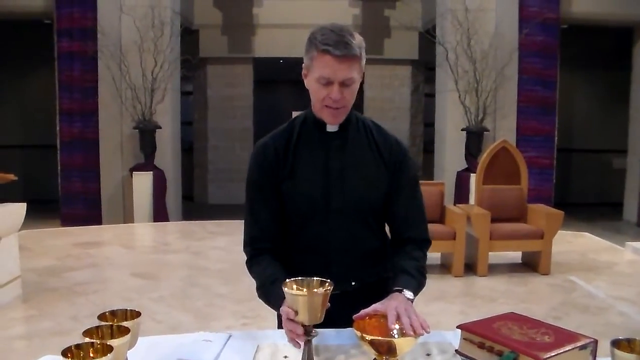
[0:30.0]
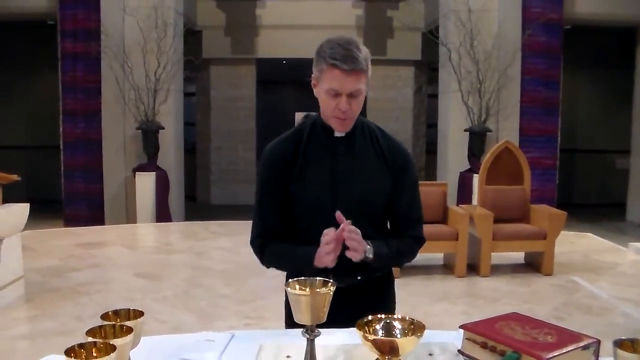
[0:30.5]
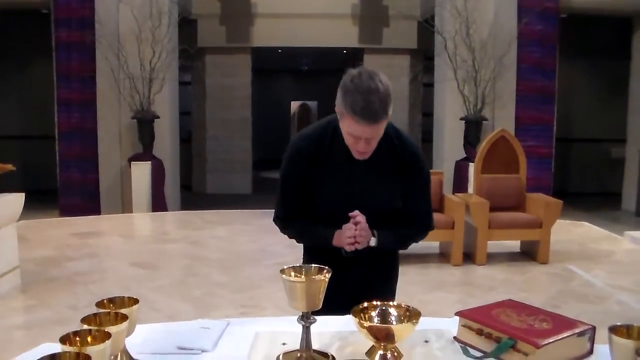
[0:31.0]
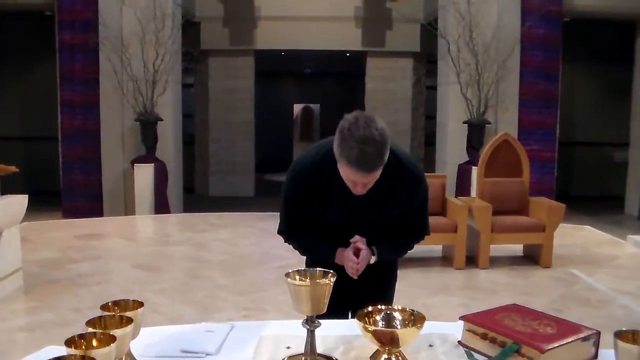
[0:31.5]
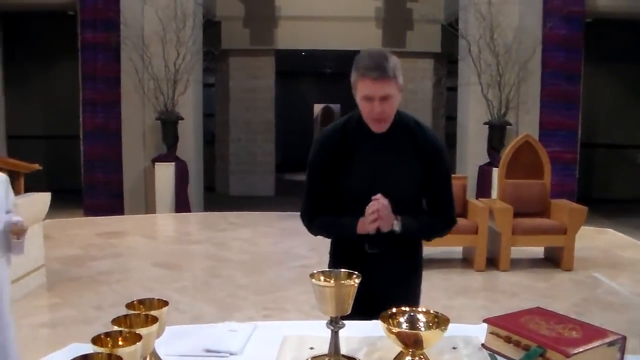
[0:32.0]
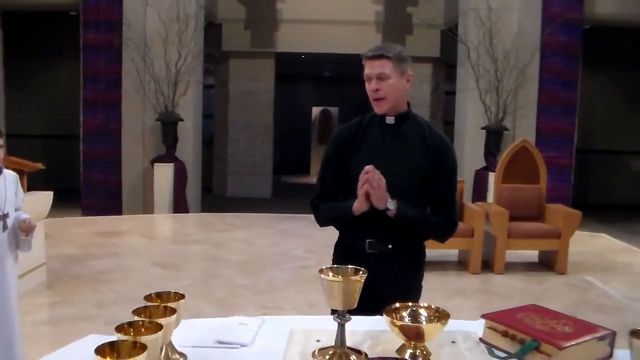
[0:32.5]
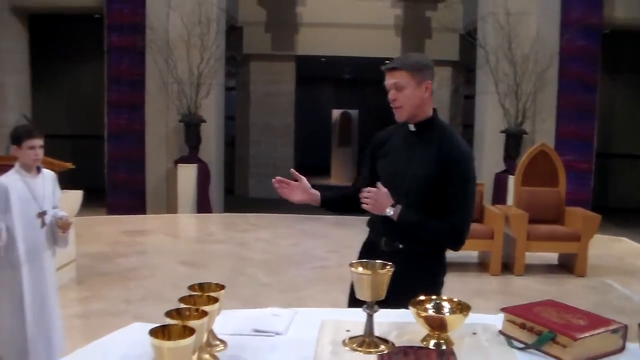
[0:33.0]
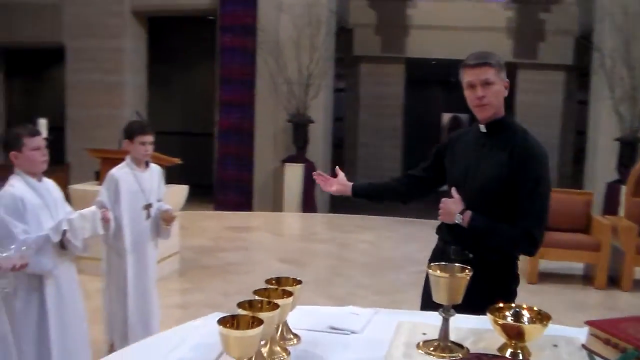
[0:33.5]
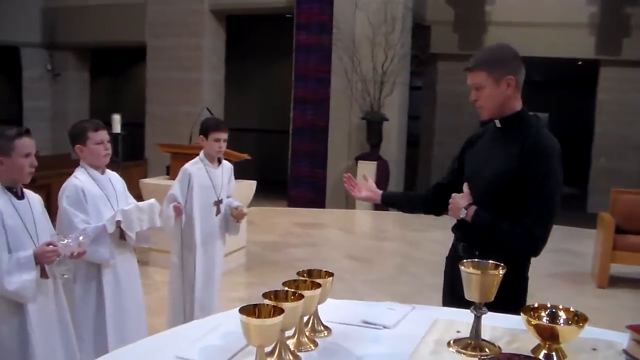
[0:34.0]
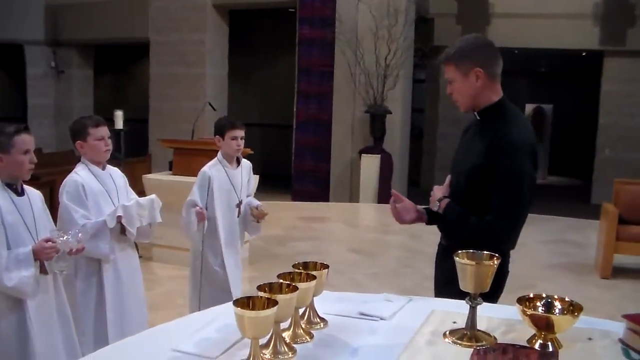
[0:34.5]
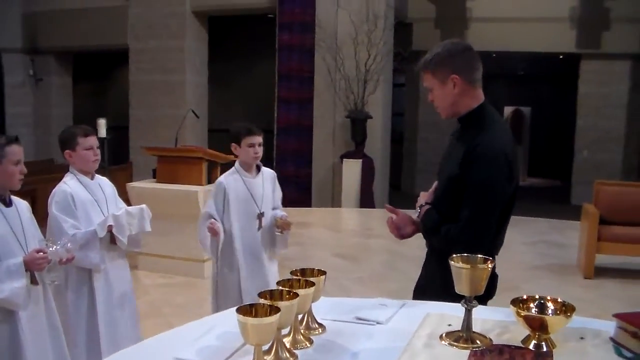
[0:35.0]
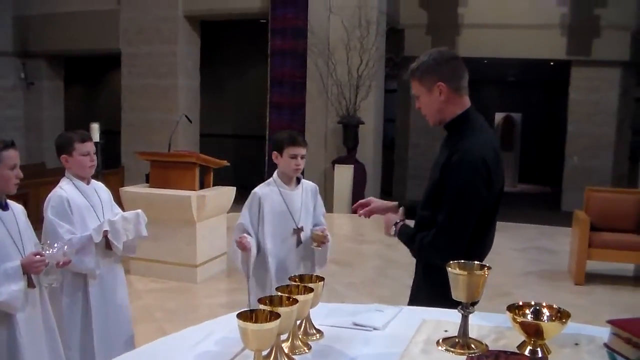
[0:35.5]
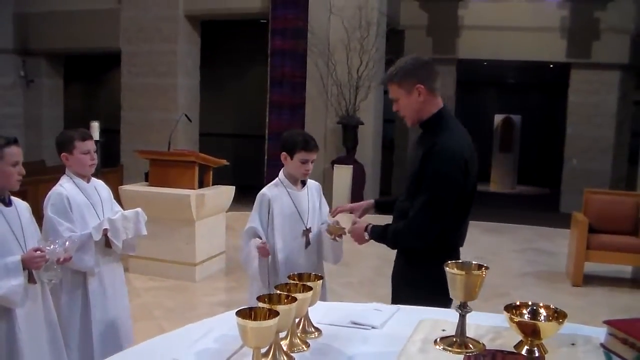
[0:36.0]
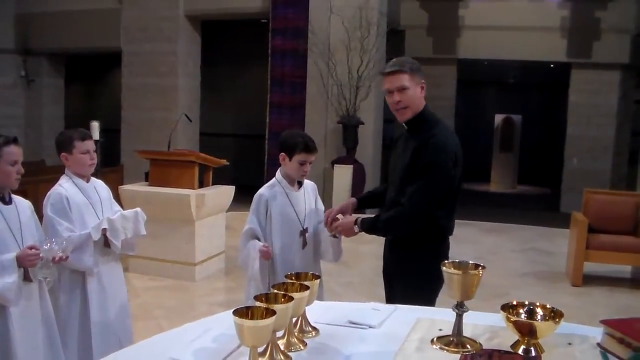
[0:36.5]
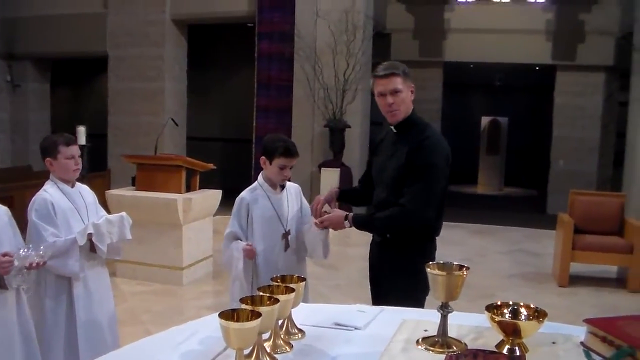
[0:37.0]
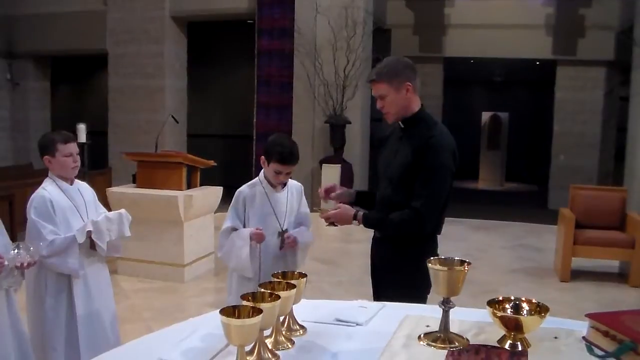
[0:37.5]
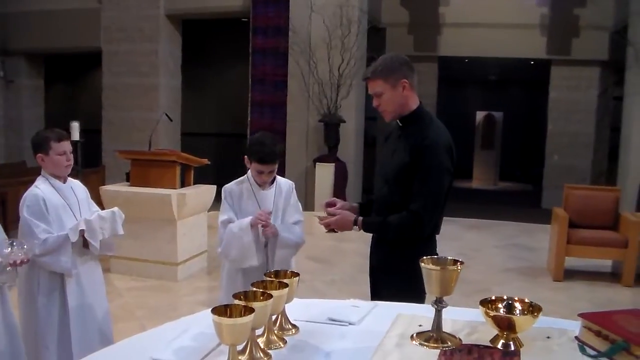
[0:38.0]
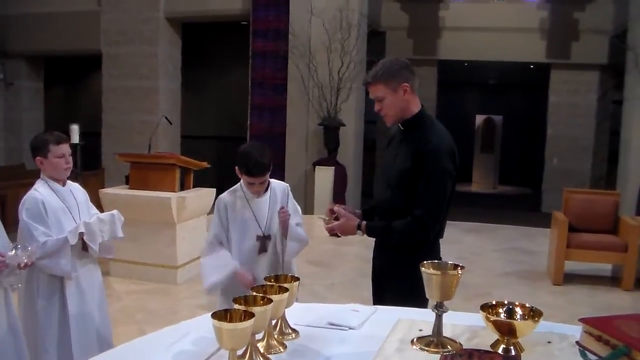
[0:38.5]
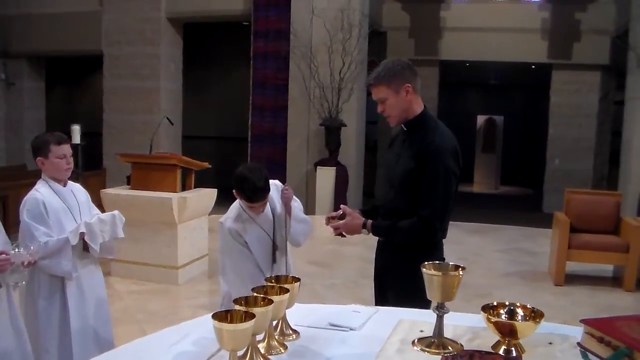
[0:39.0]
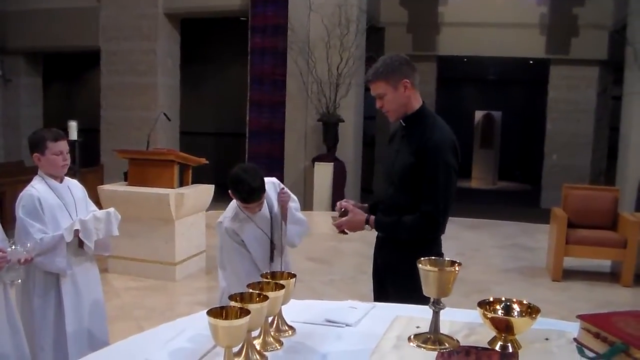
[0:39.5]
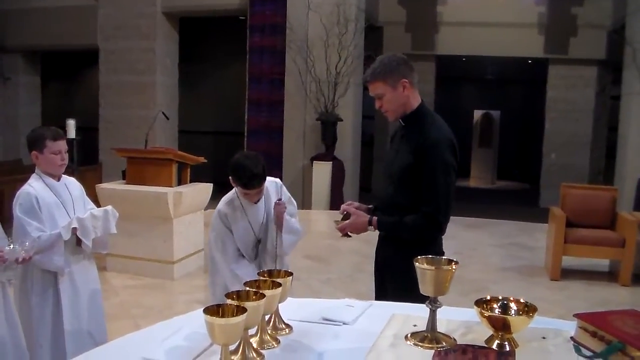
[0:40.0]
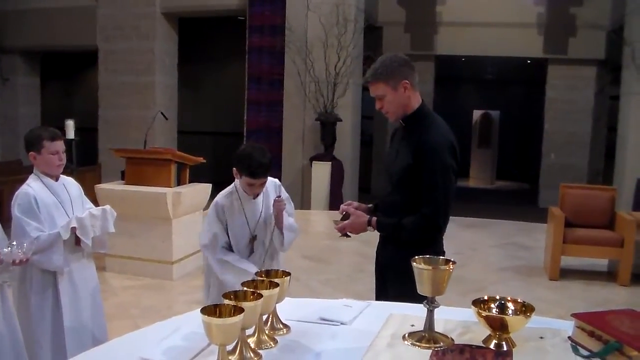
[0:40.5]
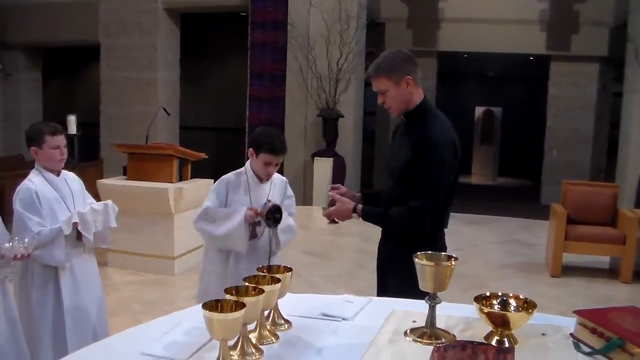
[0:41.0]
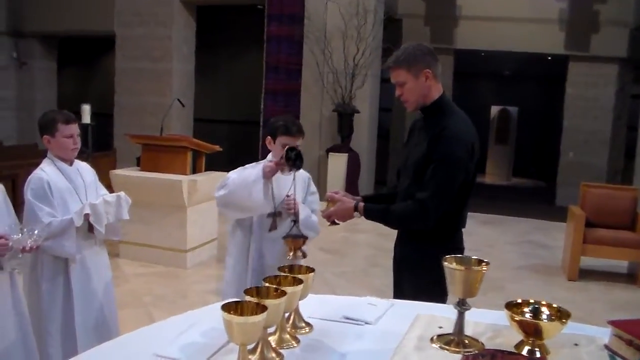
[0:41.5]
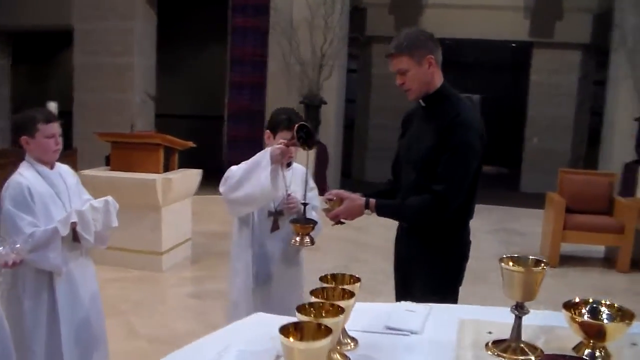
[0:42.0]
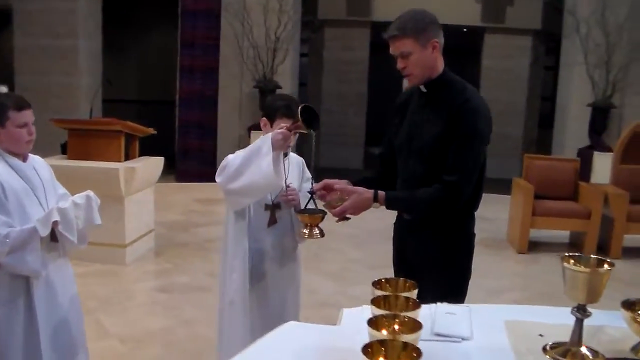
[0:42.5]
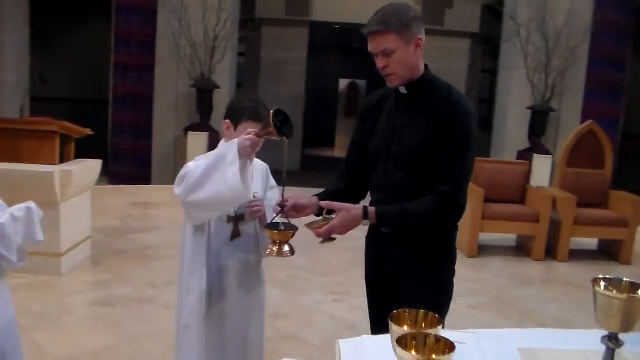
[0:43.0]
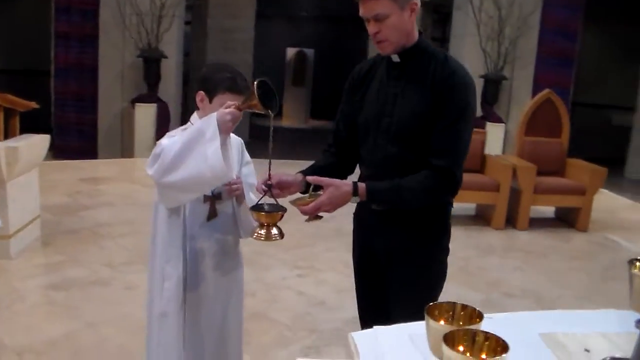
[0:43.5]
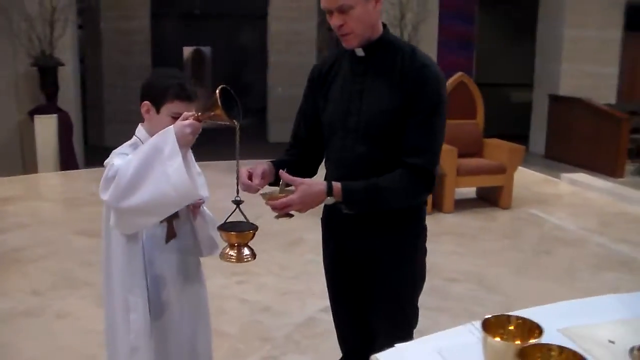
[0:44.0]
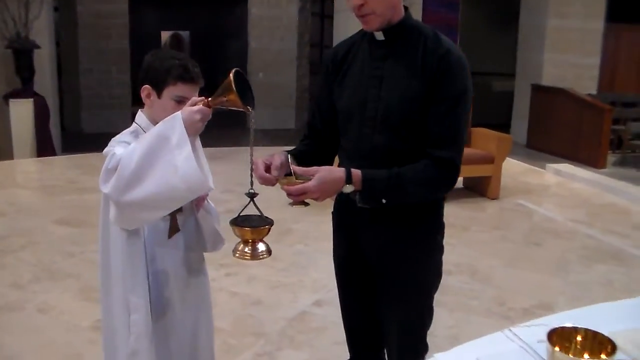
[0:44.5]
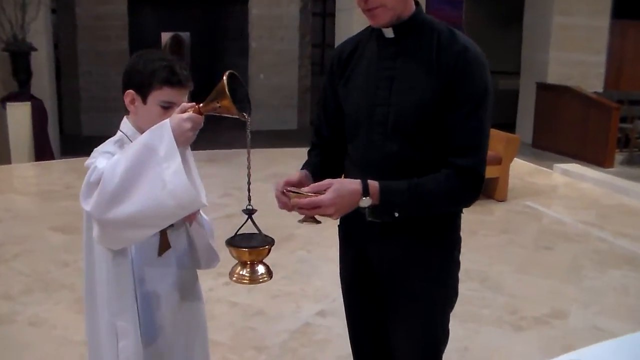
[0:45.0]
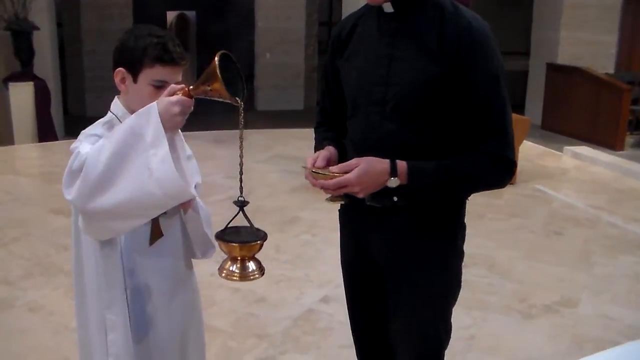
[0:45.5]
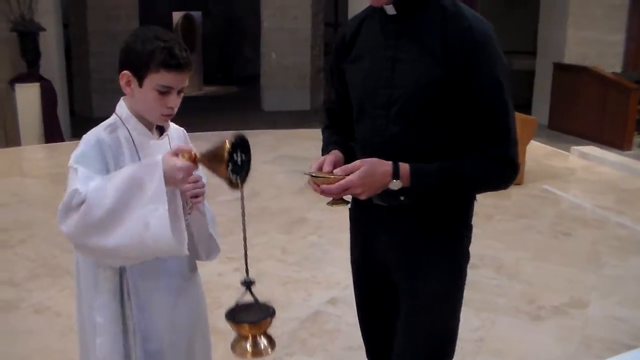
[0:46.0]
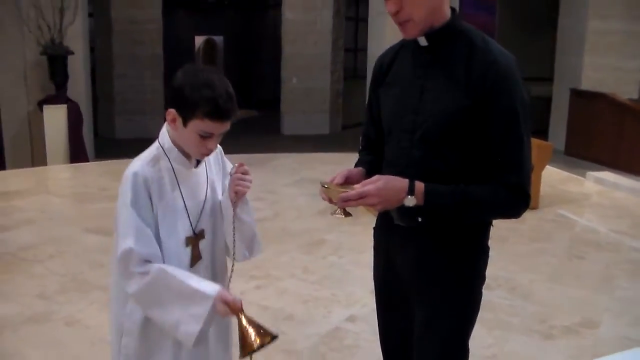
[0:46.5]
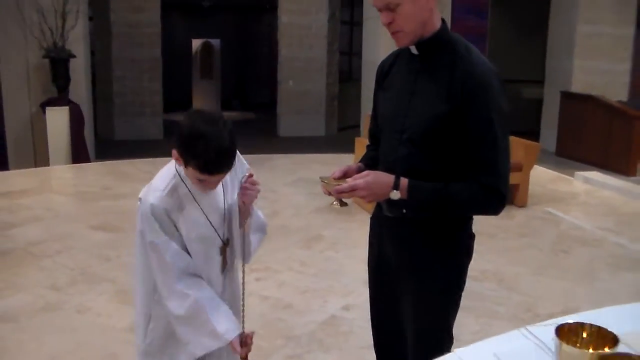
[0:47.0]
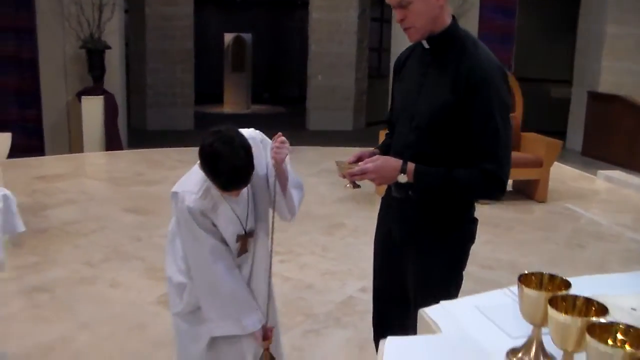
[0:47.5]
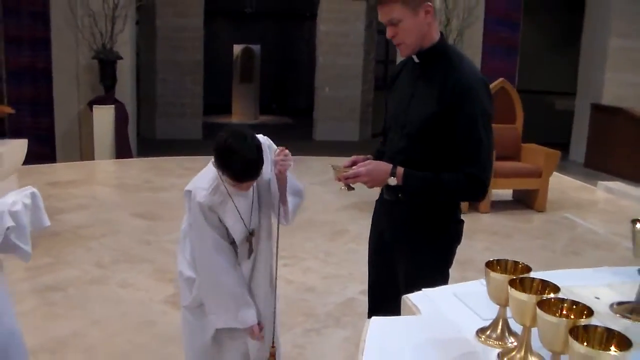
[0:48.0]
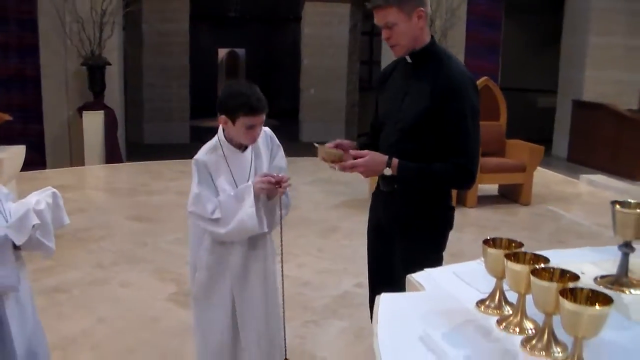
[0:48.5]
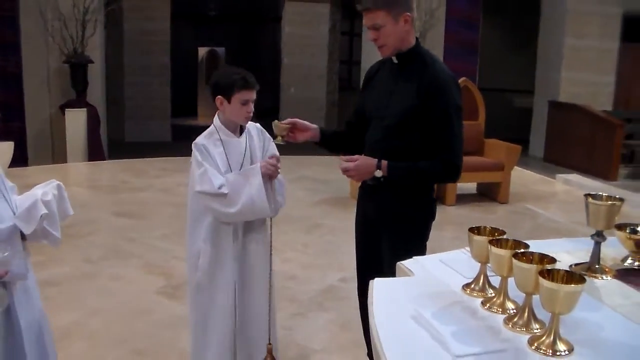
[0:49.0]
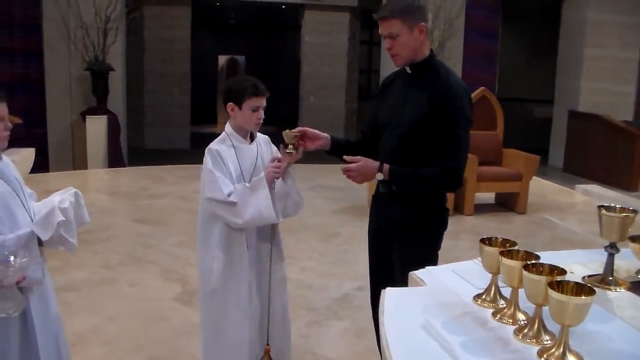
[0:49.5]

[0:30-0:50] The priest places his hands together in a prayer motion and bows towards the camera, then gestures to the boy nearest him to come over. The boy walks over and holds up what looks like an incense burner hanging from a rope. The priest takes a spoonful of some sort of substance and pours it into the burner held up by the boy, and smoke can be seen coming from it. After only one scoop, the boy dangles the incense burner back down toward the ground. The priest hands the boy the small cup from which he poured the substance, and the boy hands the priest the smoking incense burner hanging from the rope. Both the boy and the priest look very serious about what they are doing, and some of the other boys have their eyes closed.